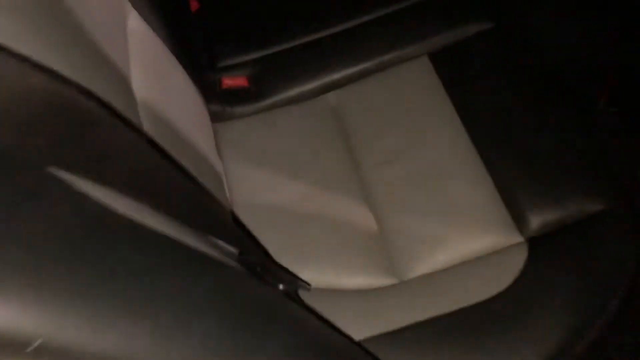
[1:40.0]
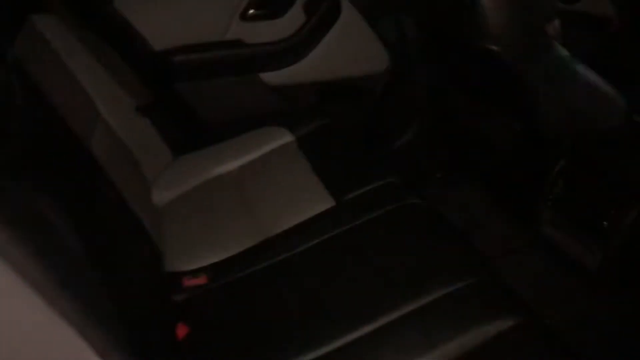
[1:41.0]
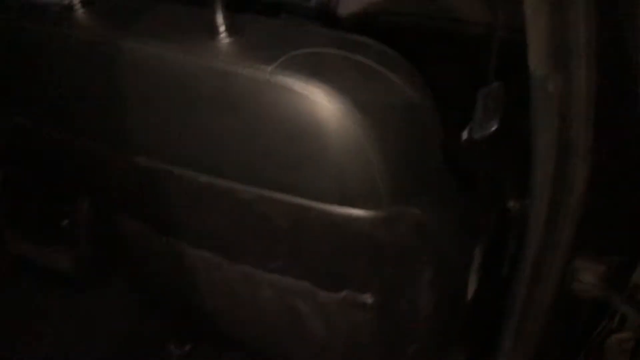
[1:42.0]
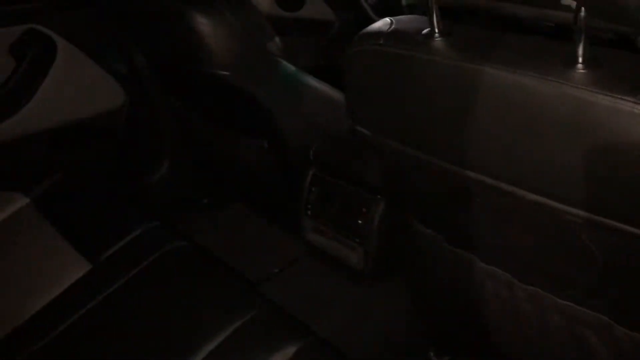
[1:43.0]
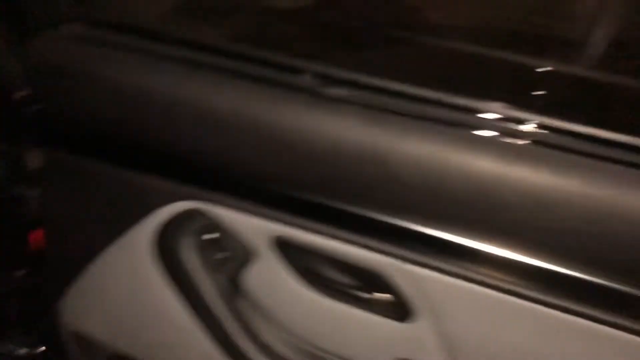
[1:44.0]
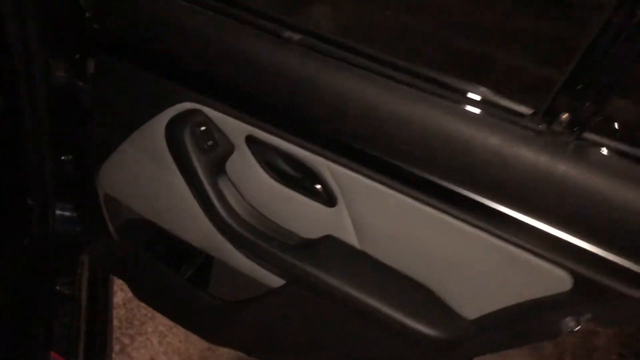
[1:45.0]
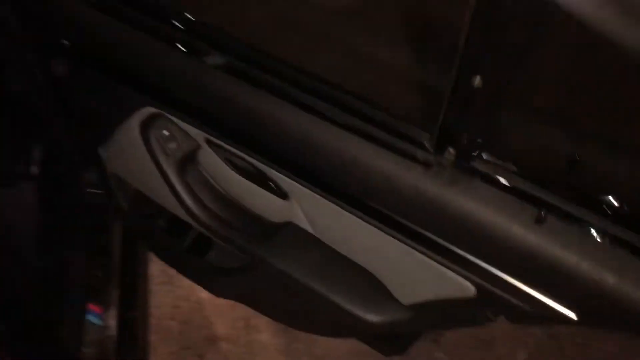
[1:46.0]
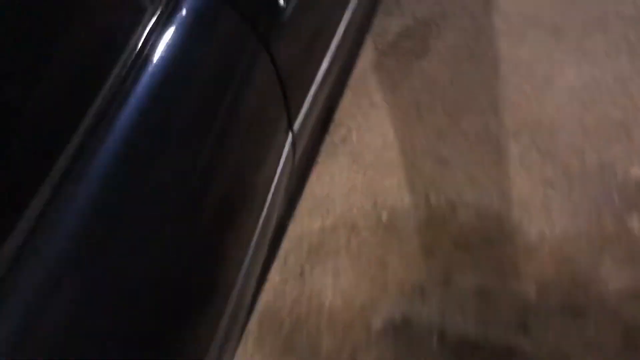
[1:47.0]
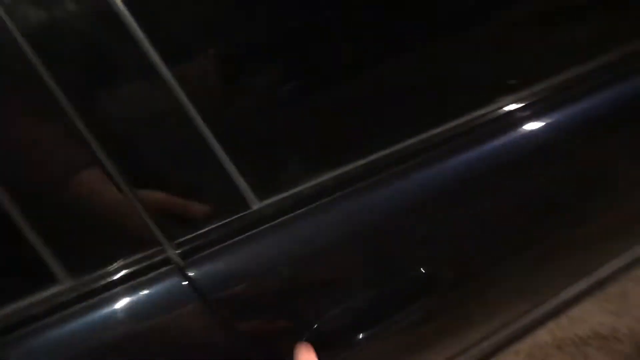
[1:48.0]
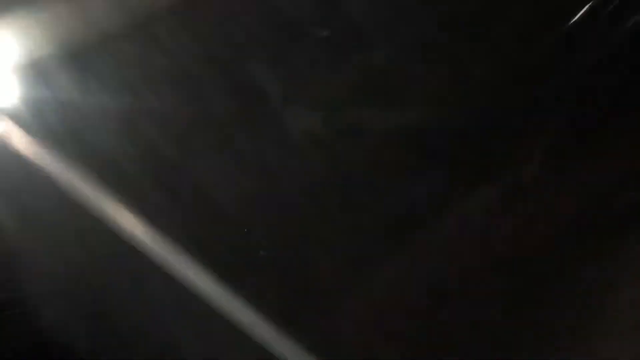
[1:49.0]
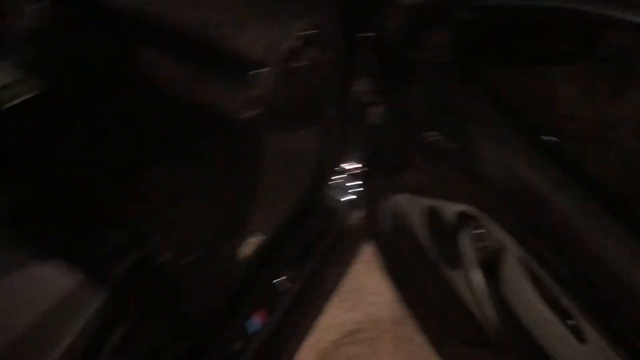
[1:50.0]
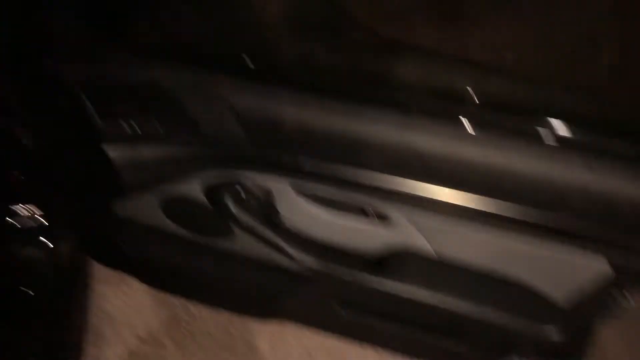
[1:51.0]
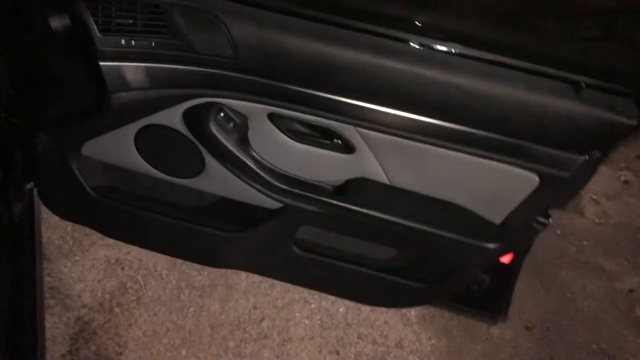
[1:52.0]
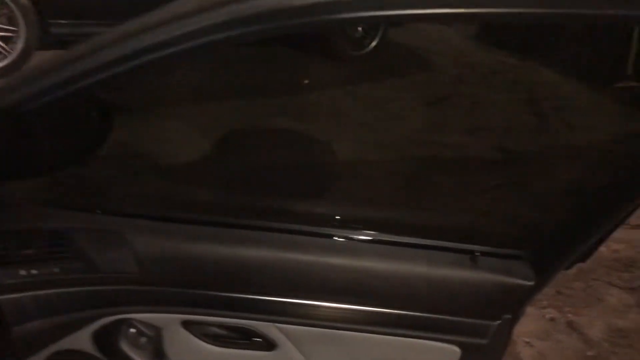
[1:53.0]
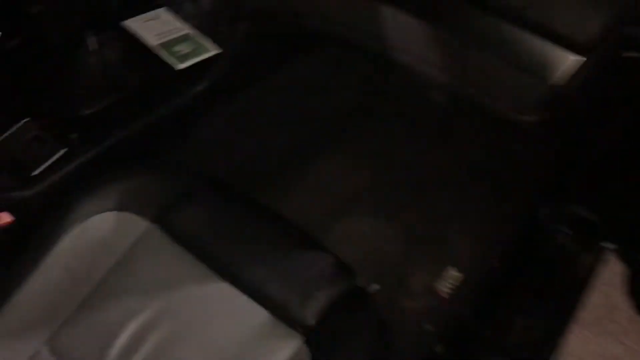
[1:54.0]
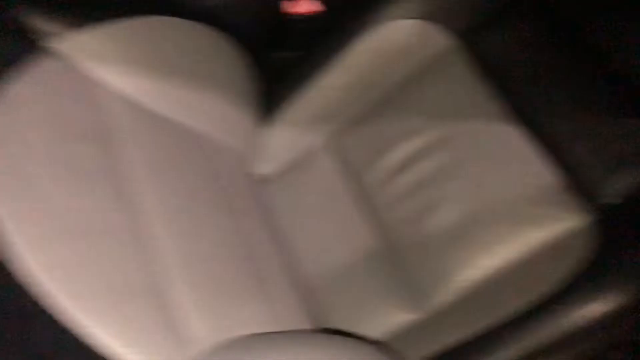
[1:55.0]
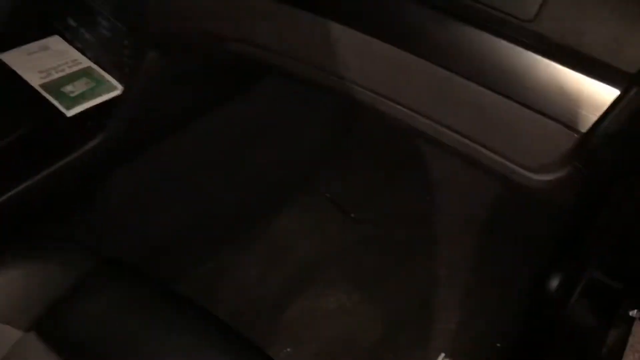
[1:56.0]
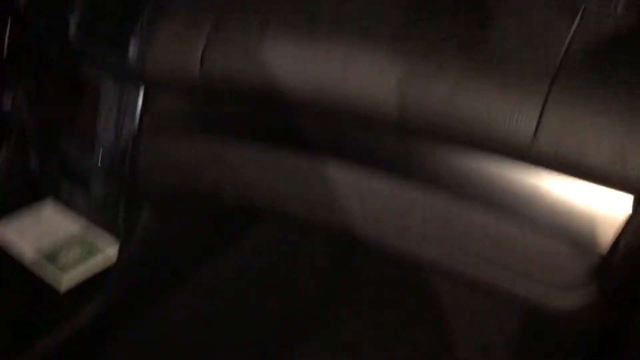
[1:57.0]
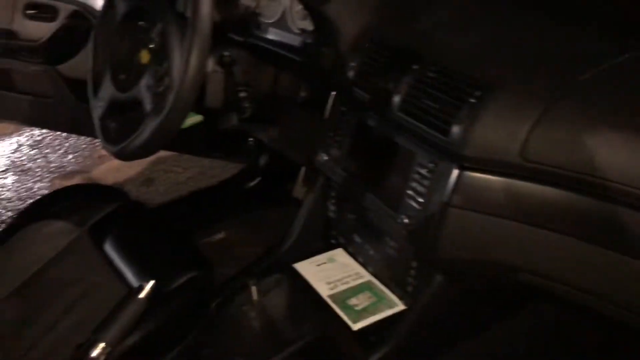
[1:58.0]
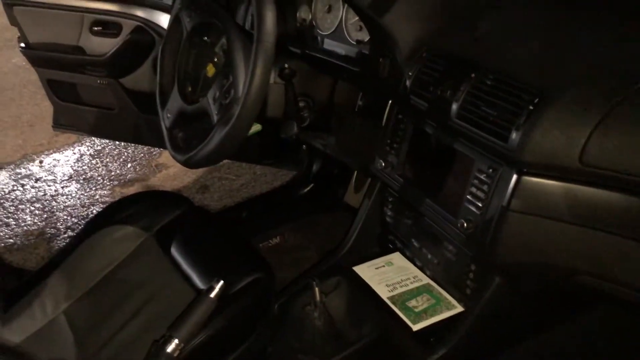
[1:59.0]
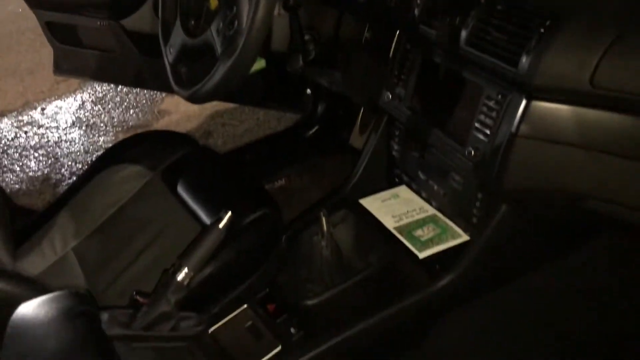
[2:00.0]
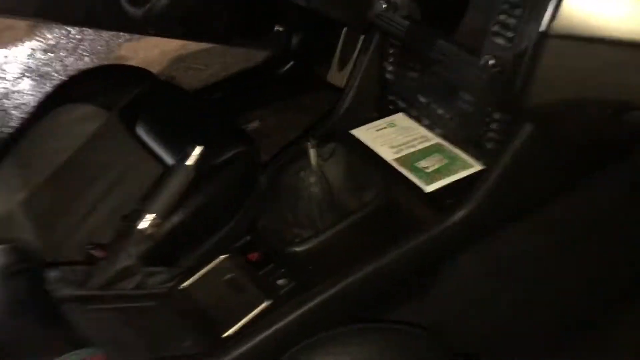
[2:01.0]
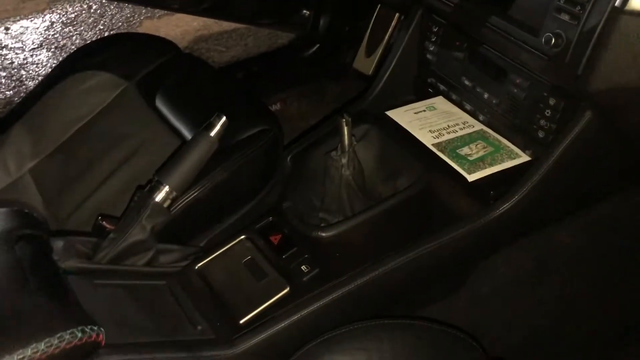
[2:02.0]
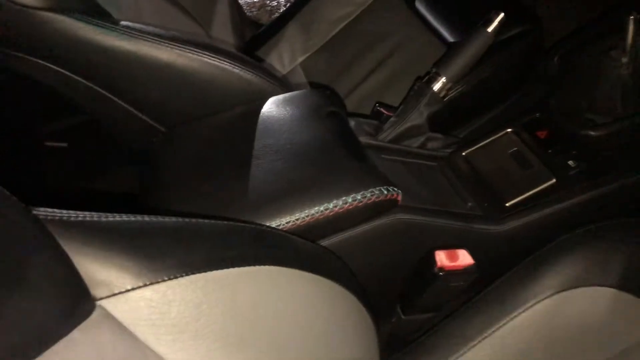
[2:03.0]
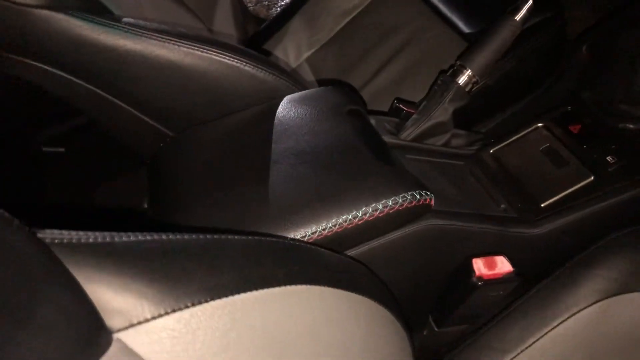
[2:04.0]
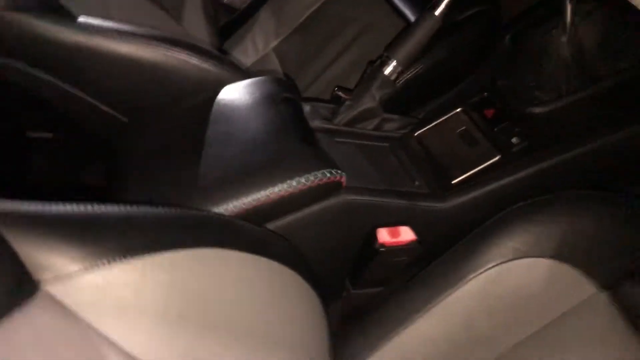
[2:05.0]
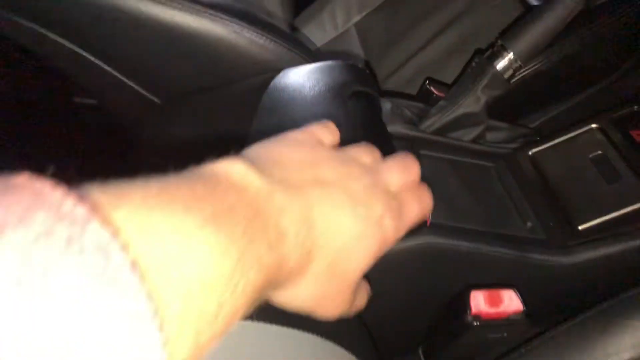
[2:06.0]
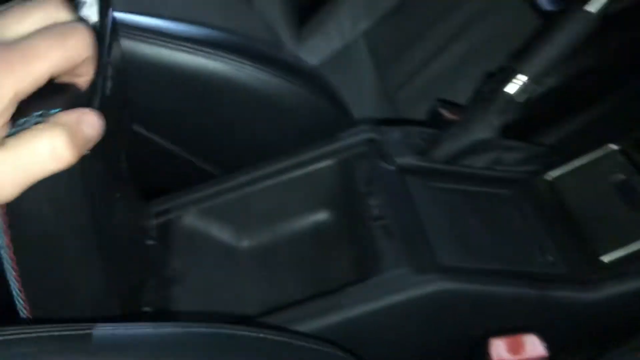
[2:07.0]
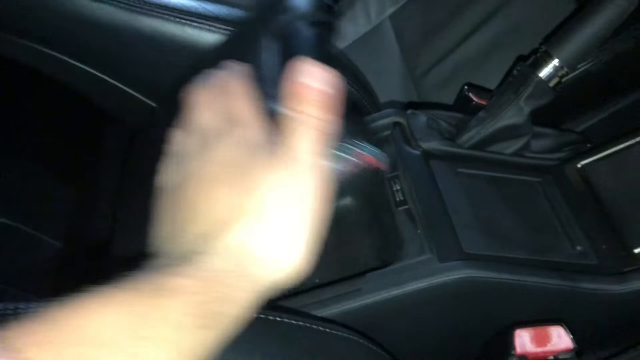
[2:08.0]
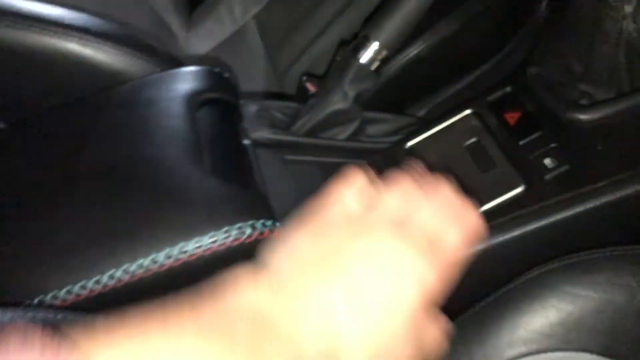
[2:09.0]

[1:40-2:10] The vehicle is left-hand drive. The rear passenger door on the right side is opened, showing the two-tone color continuing on the rear passenger seats, which are leather, with black seat belts. The front seats have pockets on their backs. The front passenger door is then opened, showing door trim in two-tone black and gray, and a speaker grill. The leather seats appear to be in top-notch condition. The dashboard is black with some gray bits continuing the two-tone color. The shifter knob has been removed and is not visible. The person opens the center console or armrest, which has blue and red stitching as this is an M Sport version.